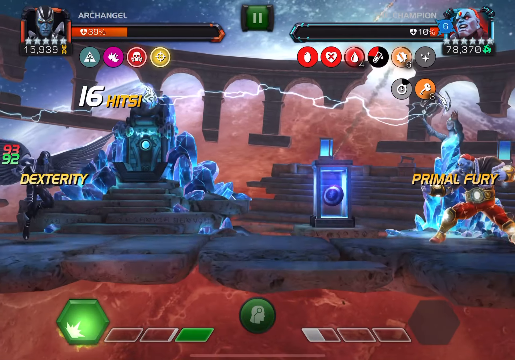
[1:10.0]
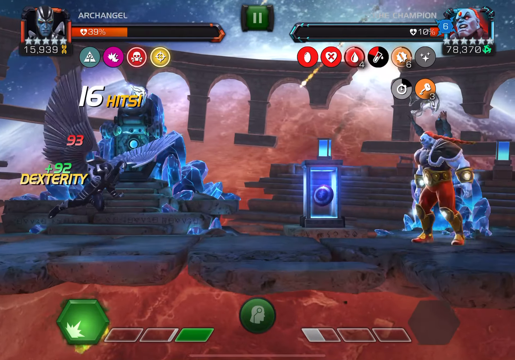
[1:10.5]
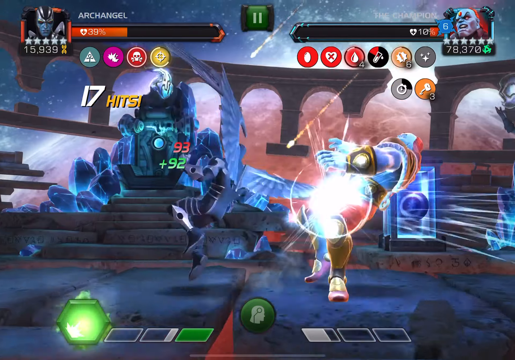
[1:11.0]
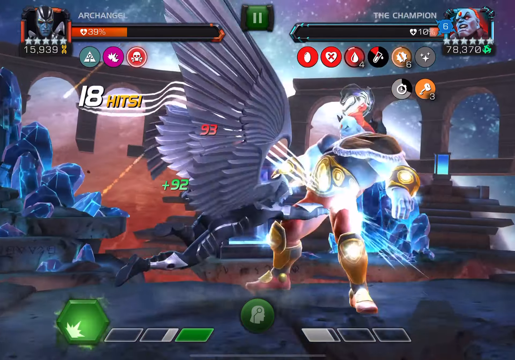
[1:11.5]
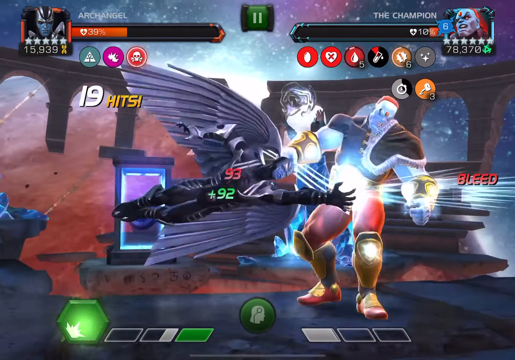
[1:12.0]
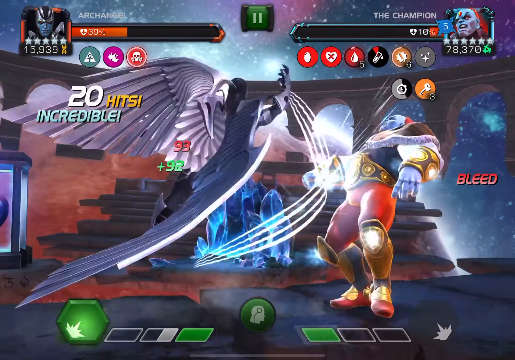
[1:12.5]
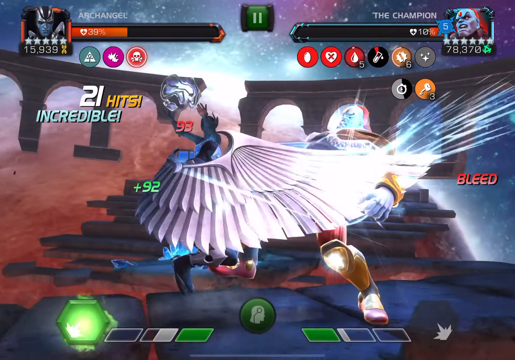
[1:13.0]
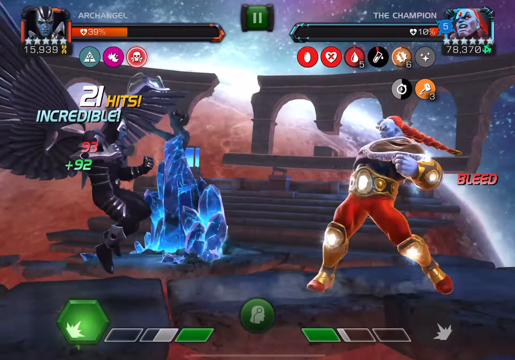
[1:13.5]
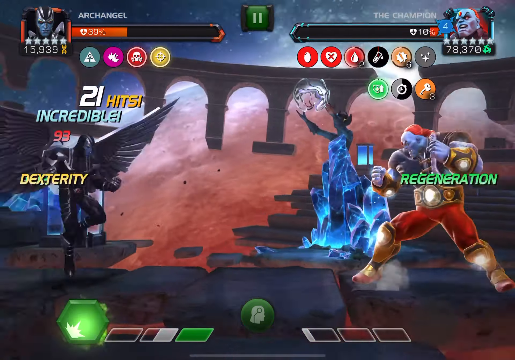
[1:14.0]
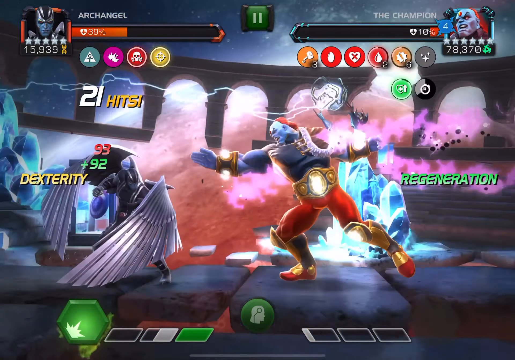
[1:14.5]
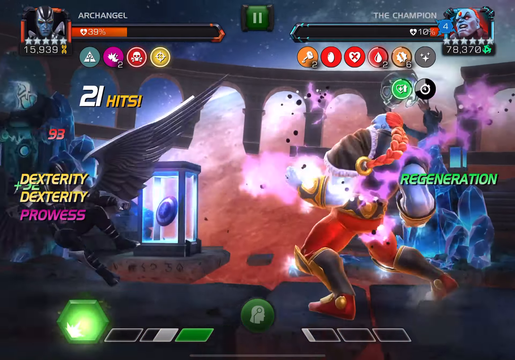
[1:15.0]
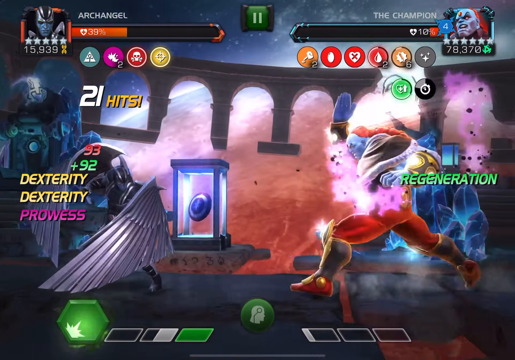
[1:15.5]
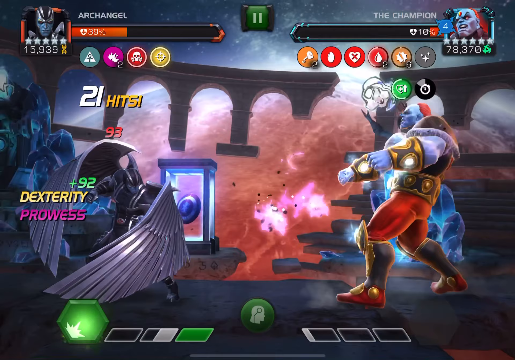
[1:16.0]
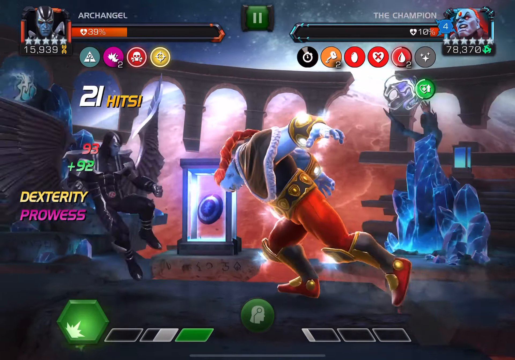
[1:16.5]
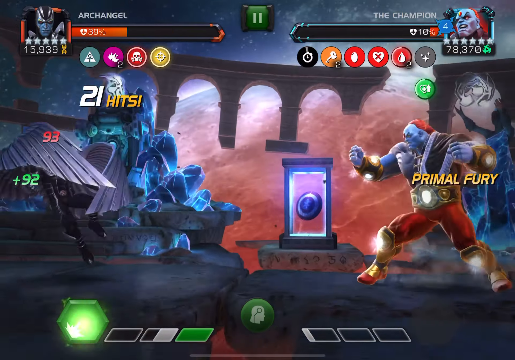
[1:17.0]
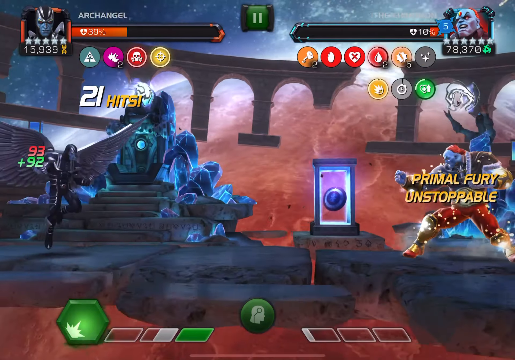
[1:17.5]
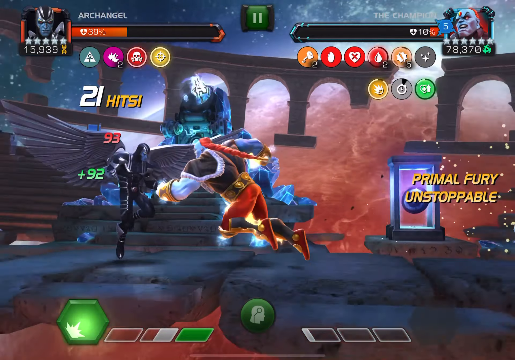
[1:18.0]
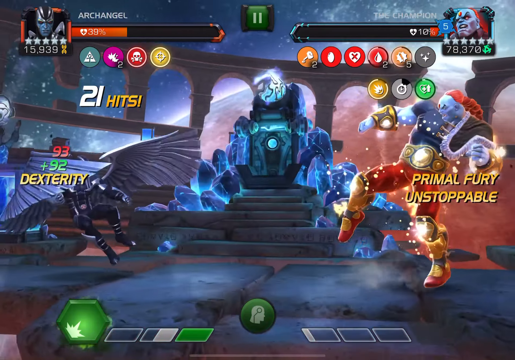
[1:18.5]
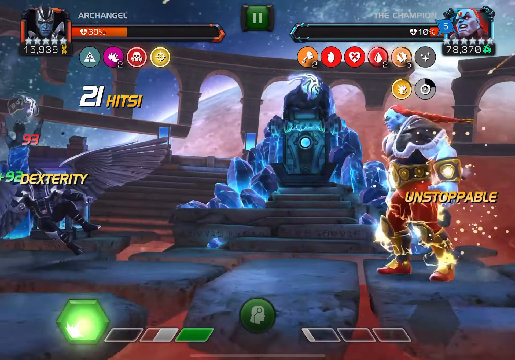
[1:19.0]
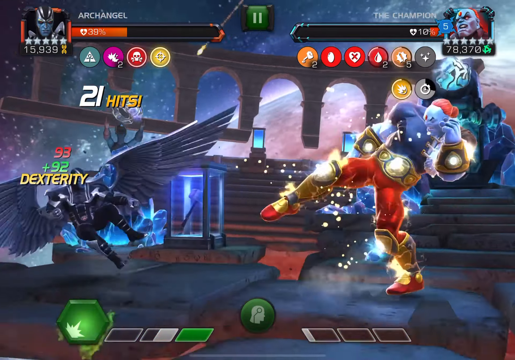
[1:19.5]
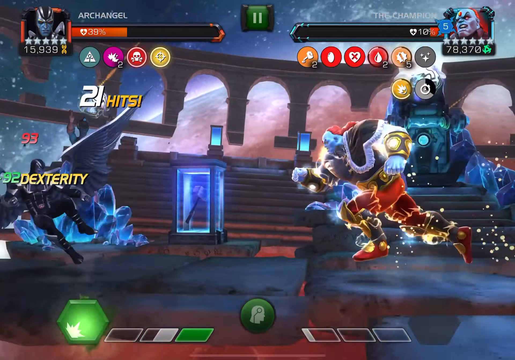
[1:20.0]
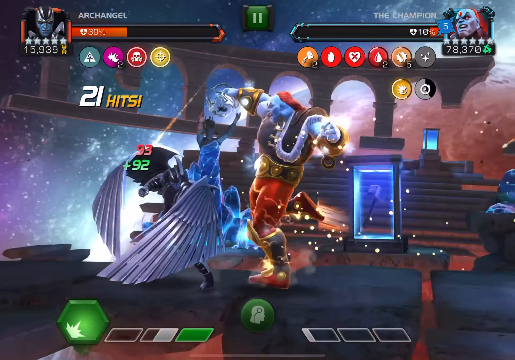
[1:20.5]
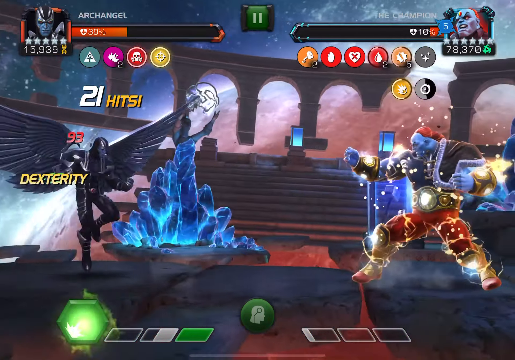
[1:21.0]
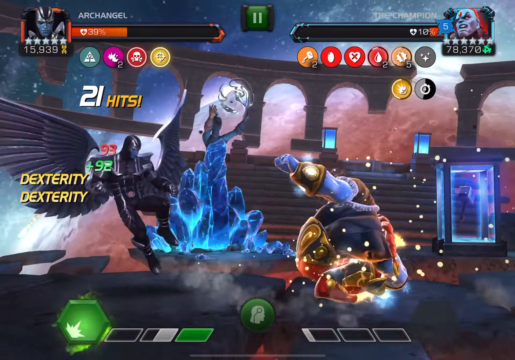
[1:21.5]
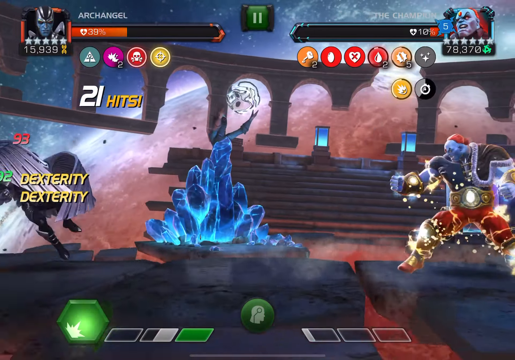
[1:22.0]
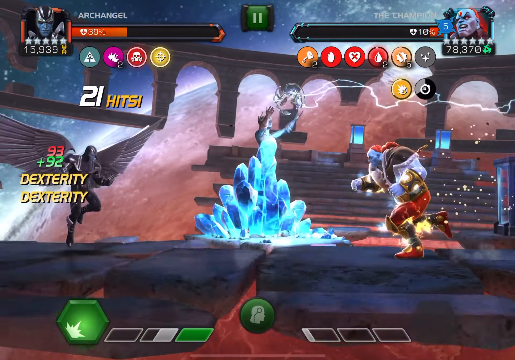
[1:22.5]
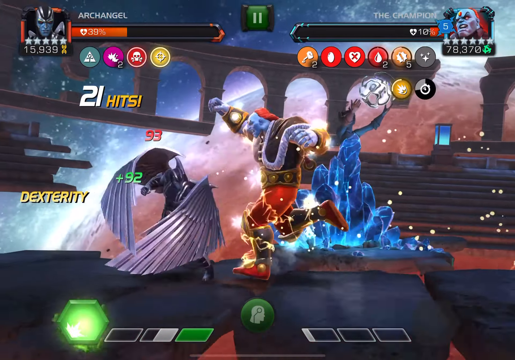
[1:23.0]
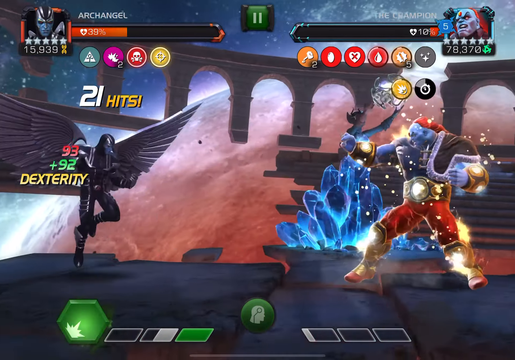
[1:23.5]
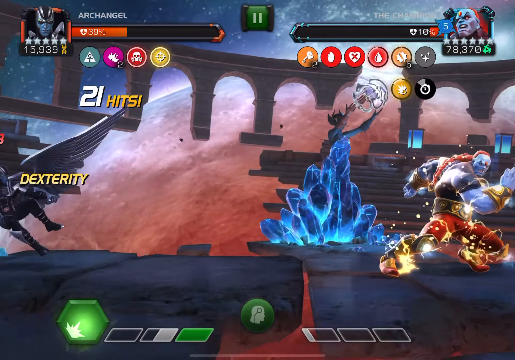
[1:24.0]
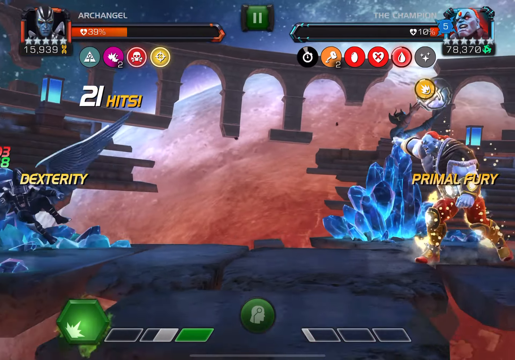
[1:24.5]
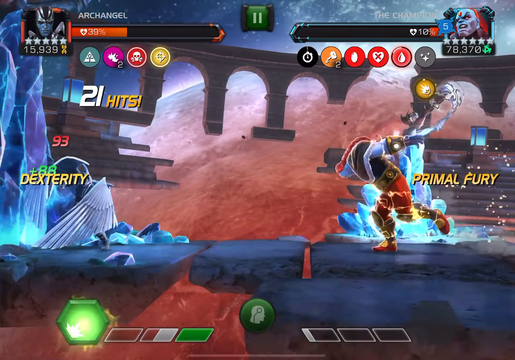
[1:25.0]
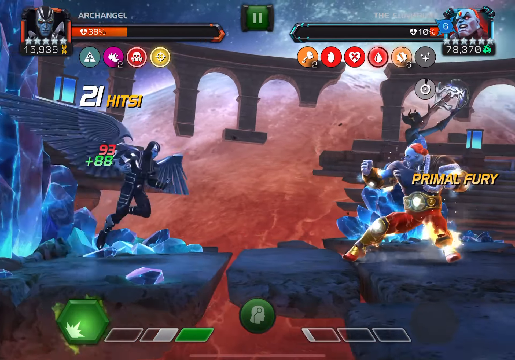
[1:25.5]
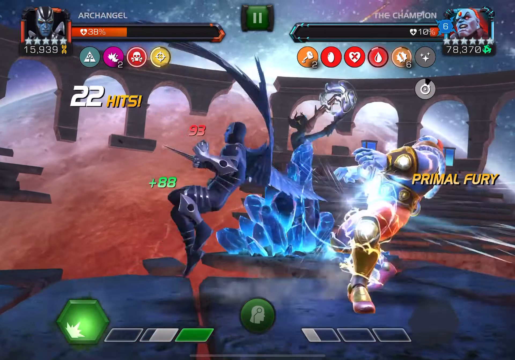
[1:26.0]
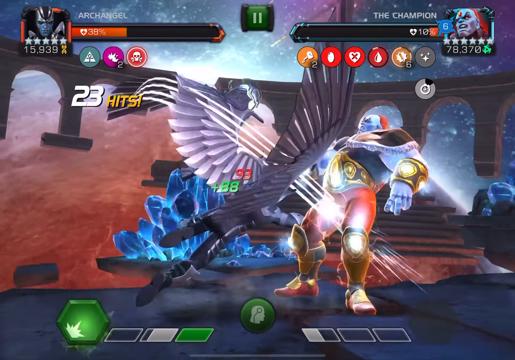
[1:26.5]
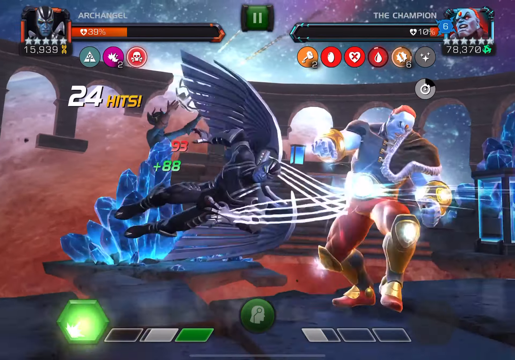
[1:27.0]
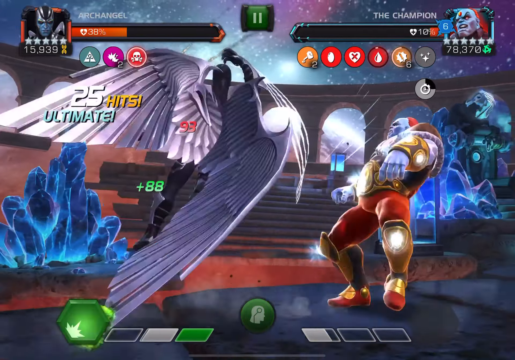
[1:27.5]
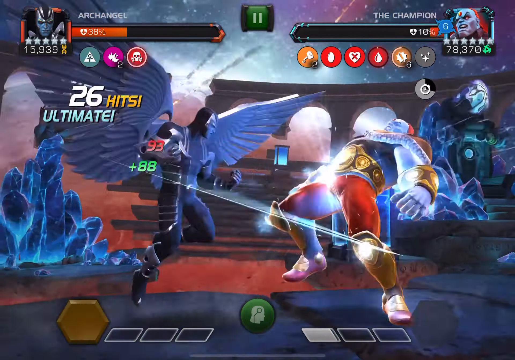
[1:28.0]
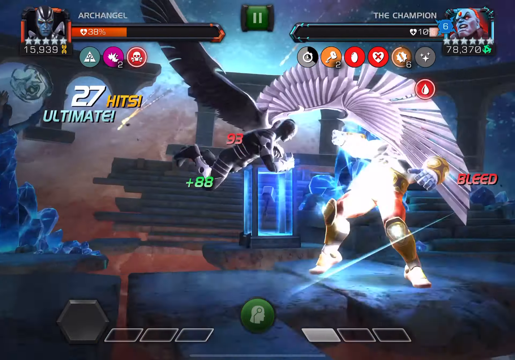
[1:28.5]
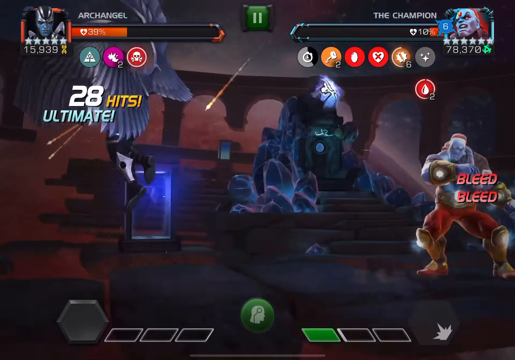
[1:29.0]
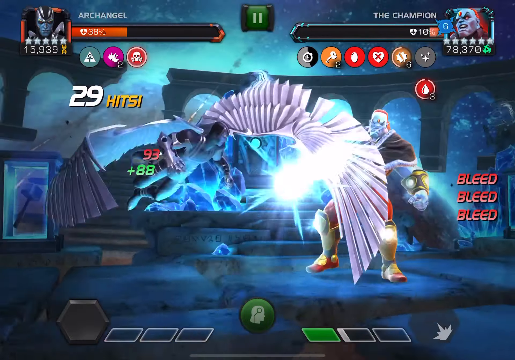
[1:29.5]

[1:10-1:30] Archangel's health is on the left at 39%, and the Champion's health is on the right at 10%, with their icons also visible. Archangel looks like a black ninja with black wings, while the Champion looks like a blue man with an orange gem on his head, orange hair, gold boots, a gold belt and gold bracelets; their character models are below, where they are seen fighting. Archangel is at a 21-hit combo, and the Champion cannot hit him, because Archangel backs up every time the Champion lunges forward, until he can jump forward and land some hits. He lands a bleed combo, but the Champion's health still does not move below 10%.